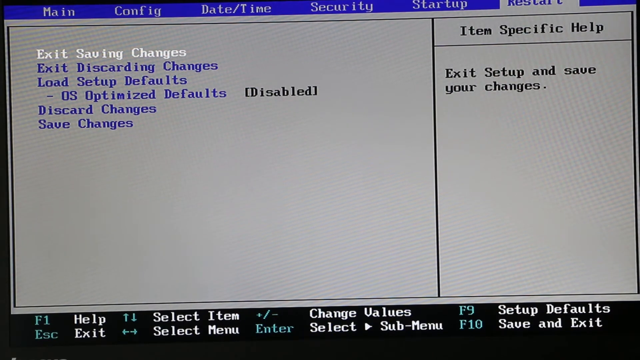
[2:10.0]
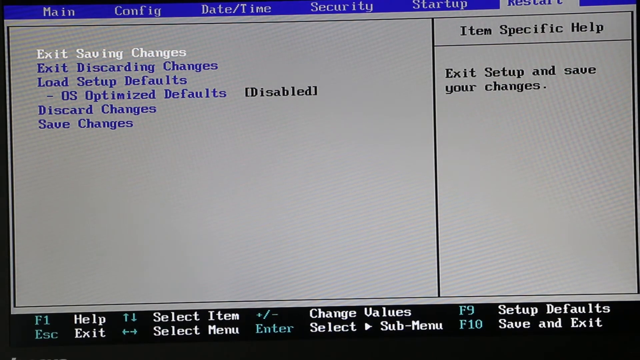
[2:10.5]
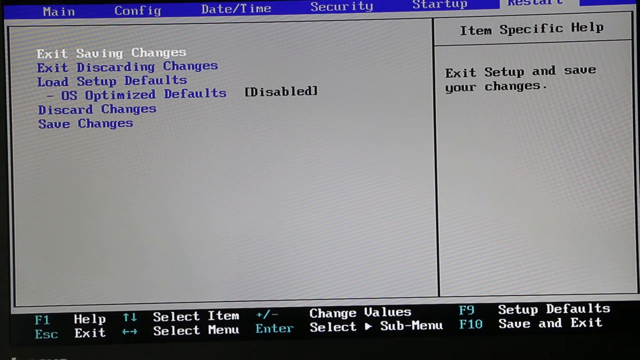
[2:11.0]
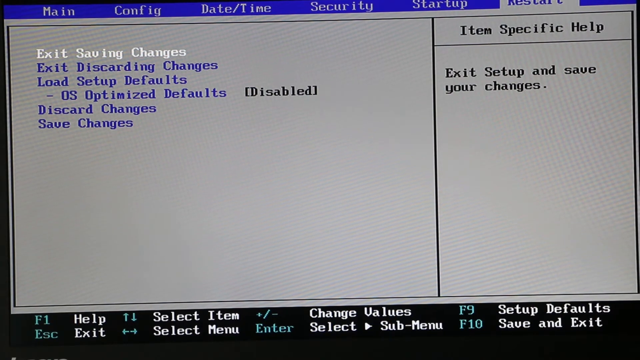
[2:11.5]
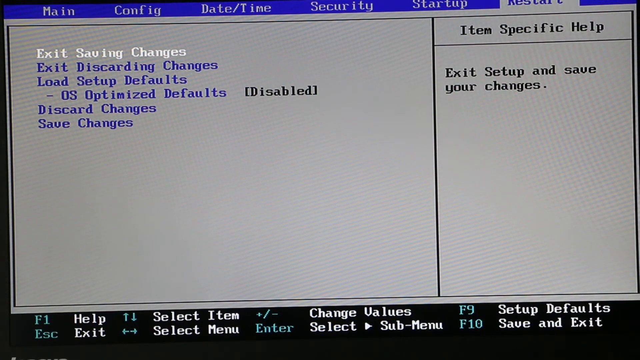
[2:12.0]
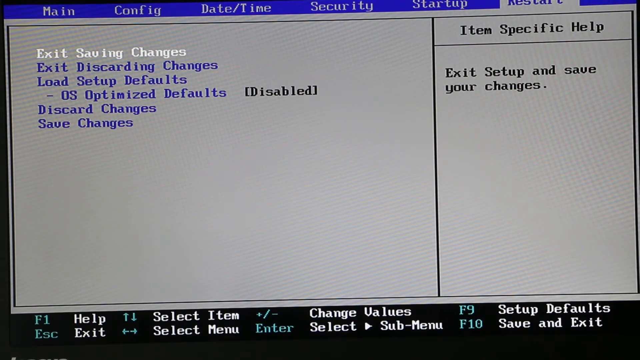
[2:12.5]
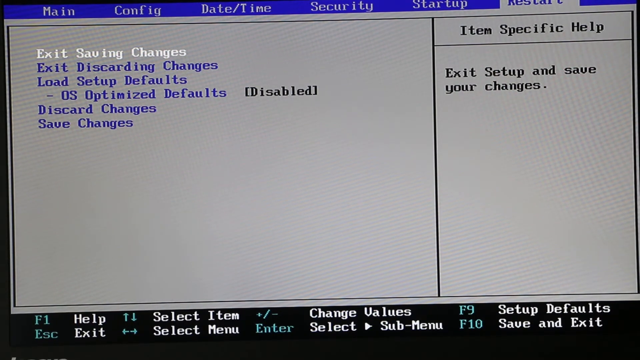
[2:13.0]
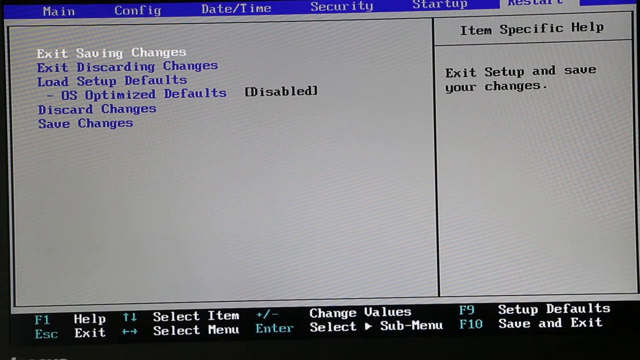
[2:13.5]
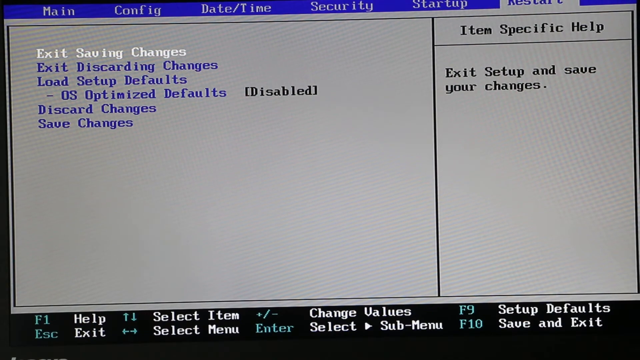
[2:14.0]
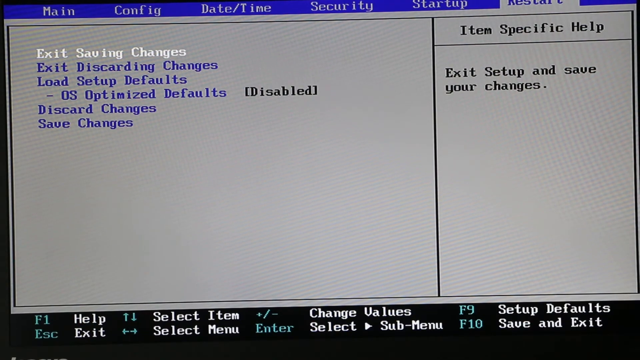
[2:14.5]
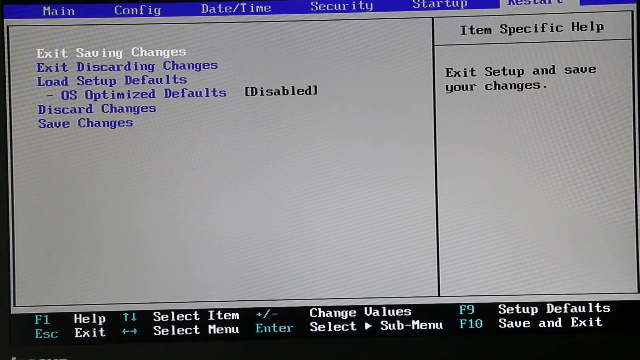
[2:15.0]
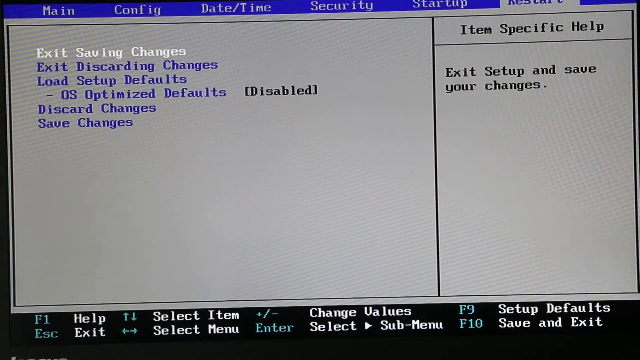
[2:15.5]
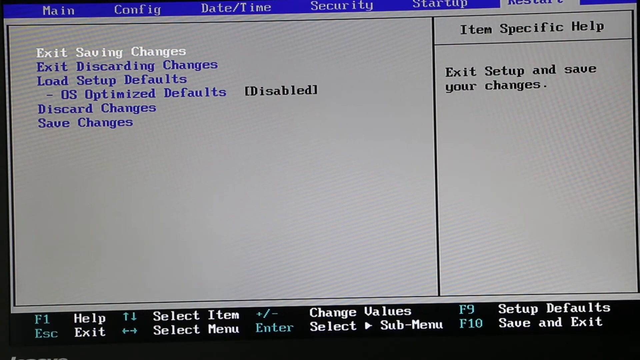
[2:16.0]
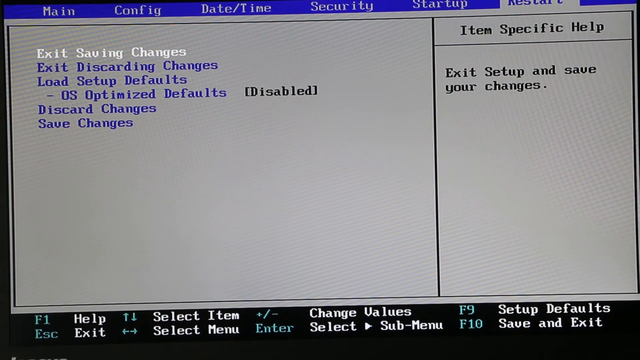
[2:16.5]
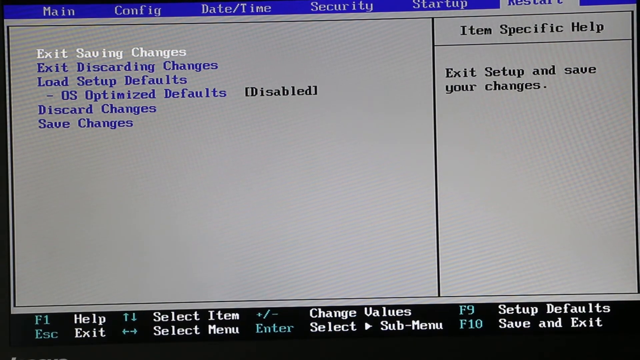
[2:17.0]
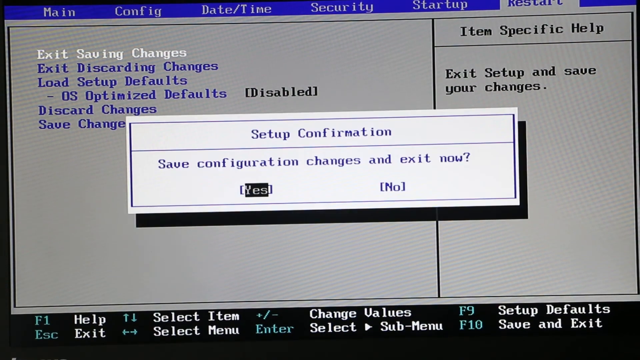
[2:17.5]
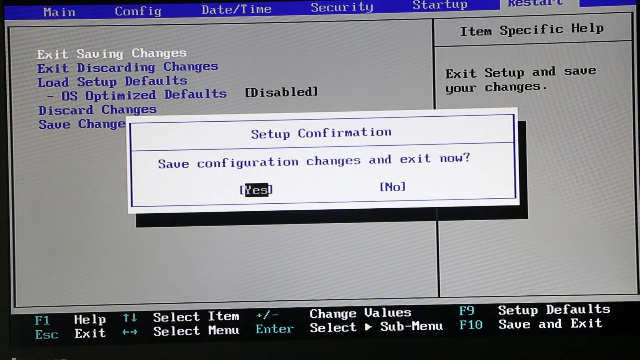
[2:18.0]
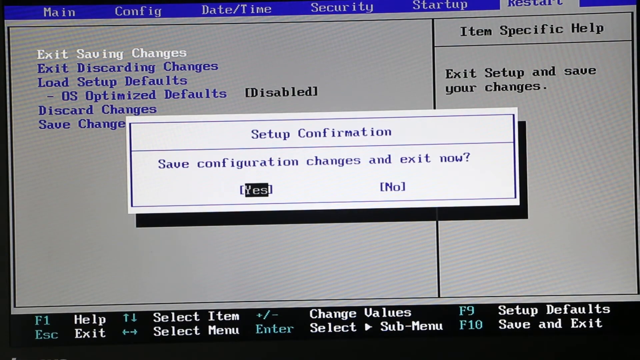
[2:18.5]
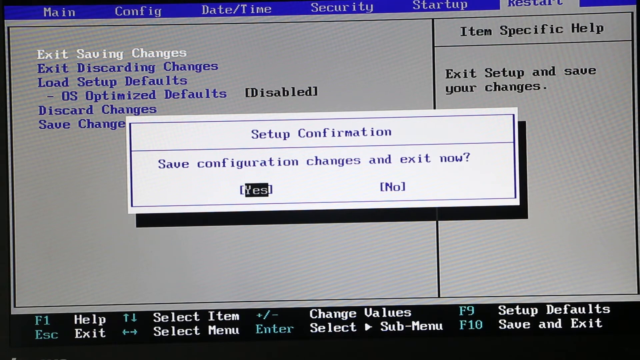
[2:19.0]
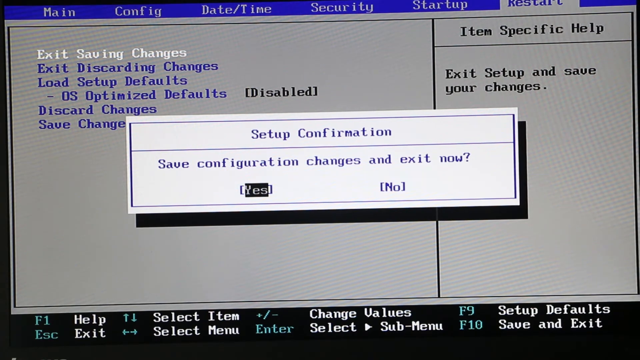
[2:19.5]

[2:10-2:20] The Restart menu of the setup screen is still shown, with the "Exit Saving Changes" option, the first in the list, still highlighted. The item-specific help explanation is still present on the right side of the screen. The user initially does not appear to do anything. Then a text box appears in the center of the screen titled "Setup Confirmation", asking underneath "save confirmation changes and exit now", with two options, Yes and No. The user does not appear to select an option by the end of the shot.